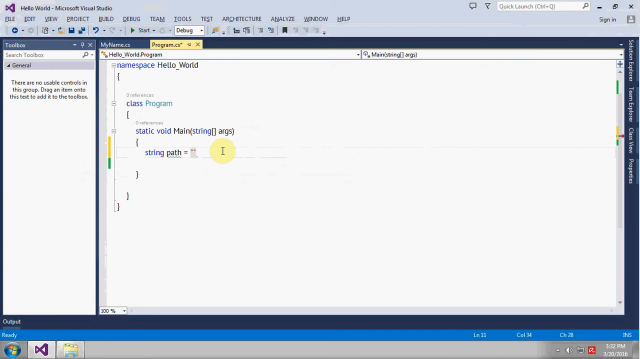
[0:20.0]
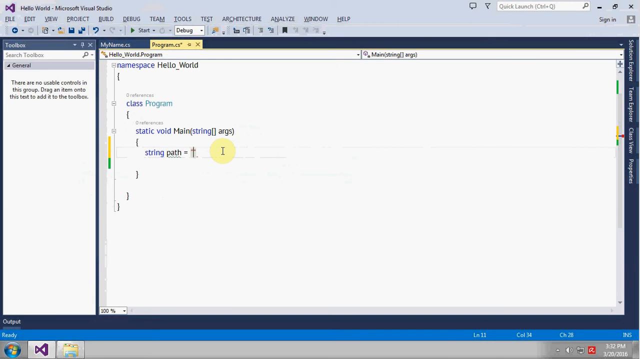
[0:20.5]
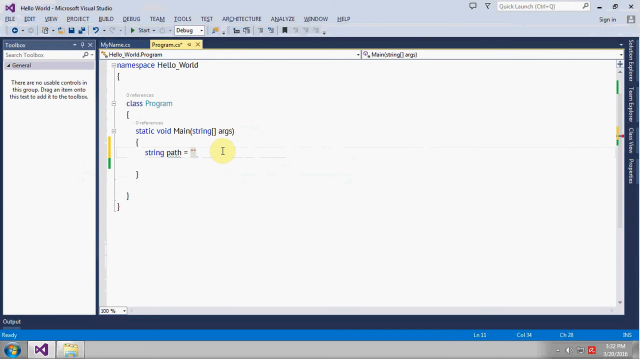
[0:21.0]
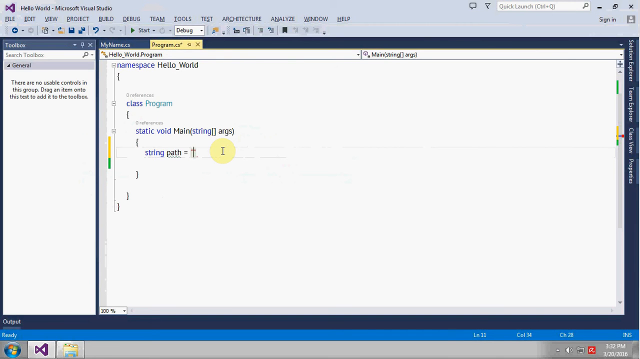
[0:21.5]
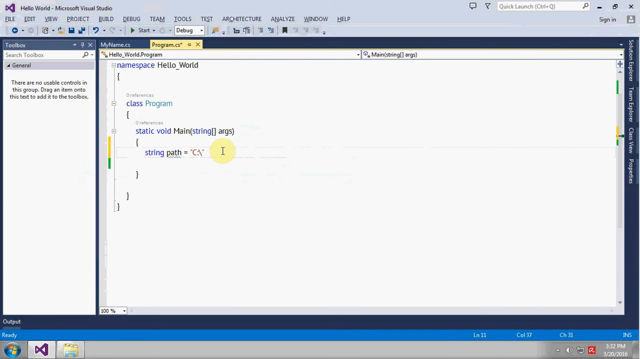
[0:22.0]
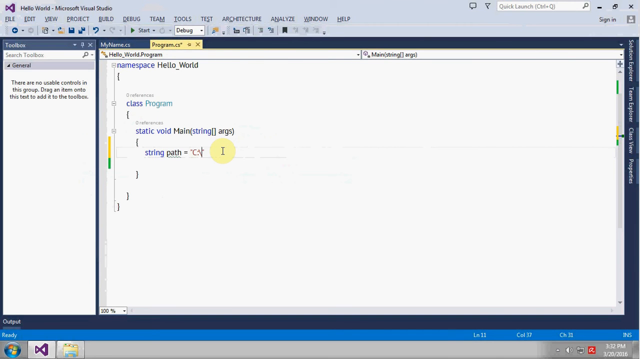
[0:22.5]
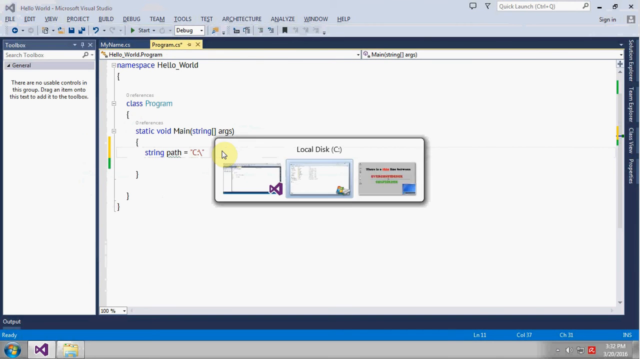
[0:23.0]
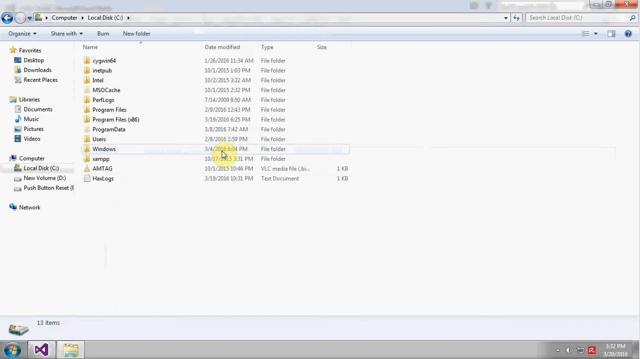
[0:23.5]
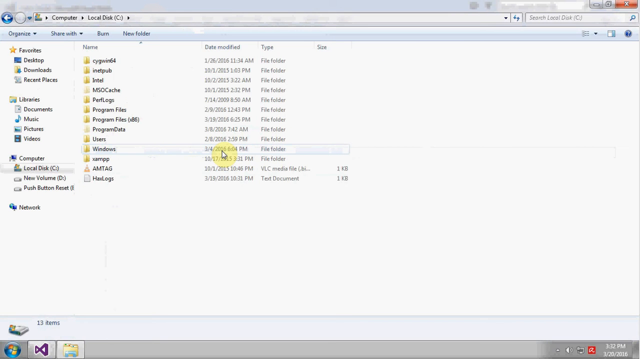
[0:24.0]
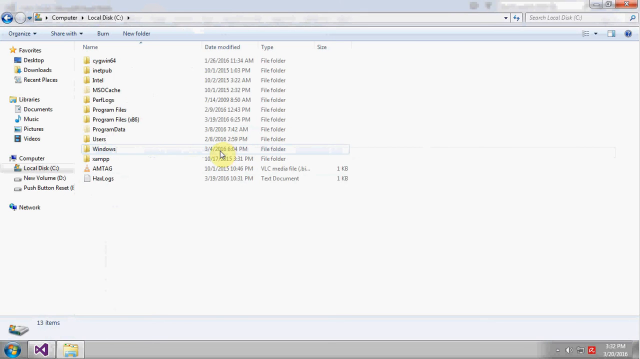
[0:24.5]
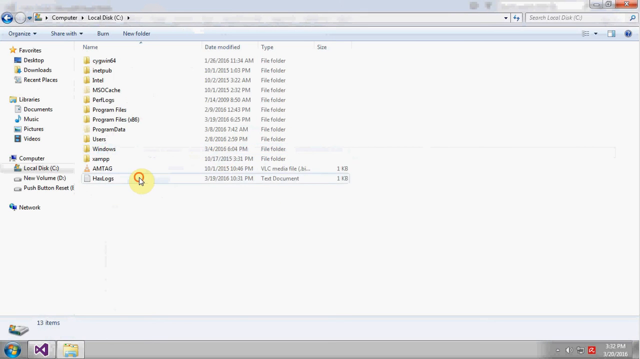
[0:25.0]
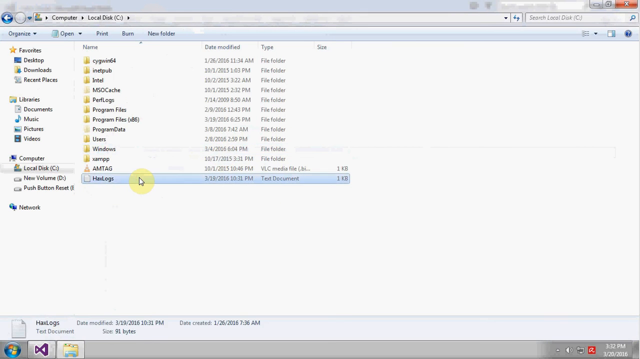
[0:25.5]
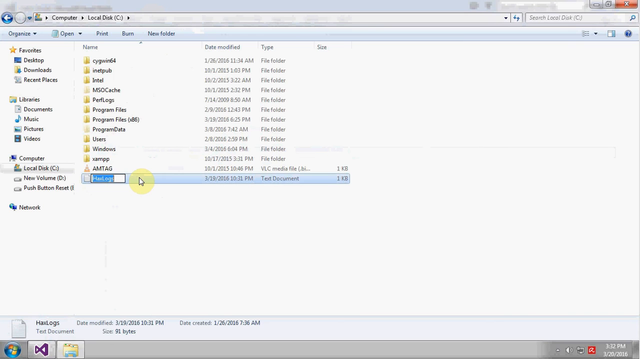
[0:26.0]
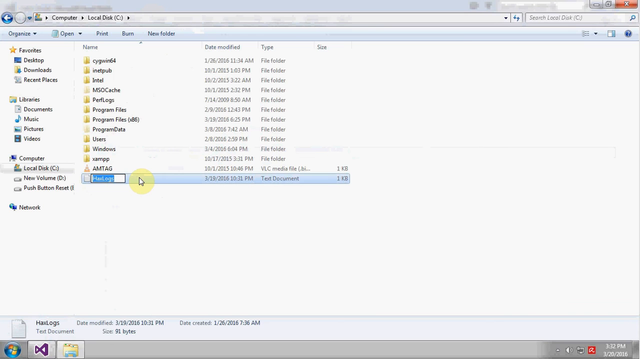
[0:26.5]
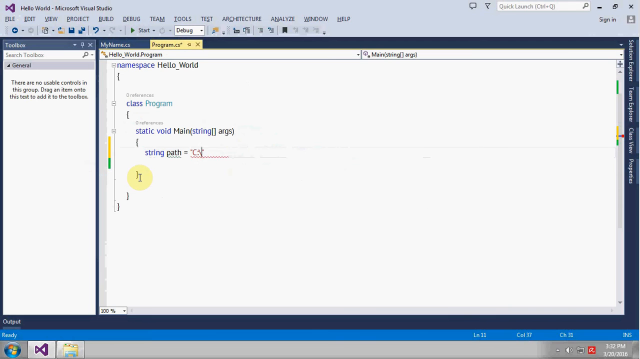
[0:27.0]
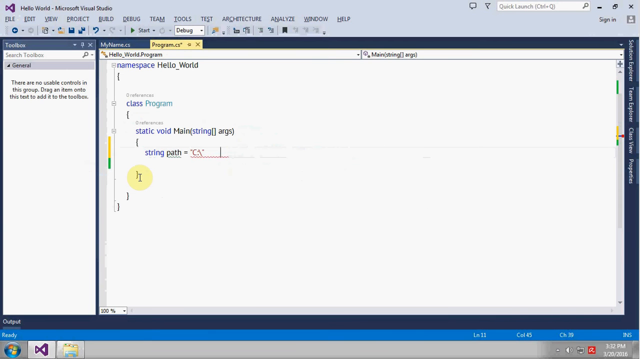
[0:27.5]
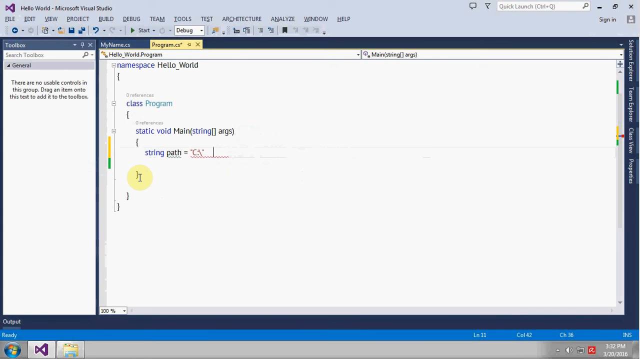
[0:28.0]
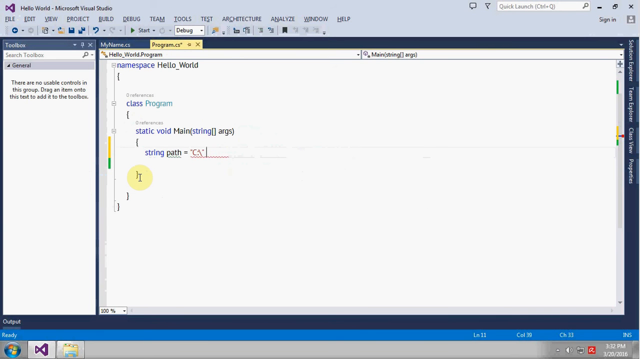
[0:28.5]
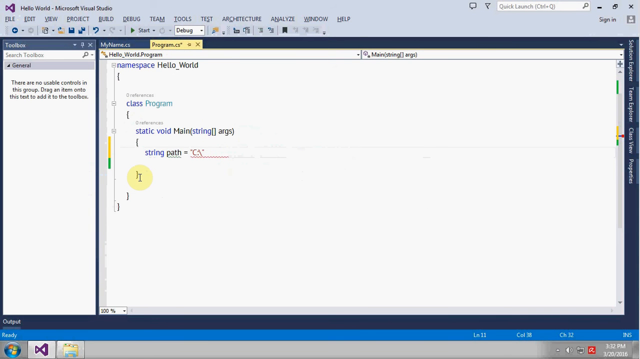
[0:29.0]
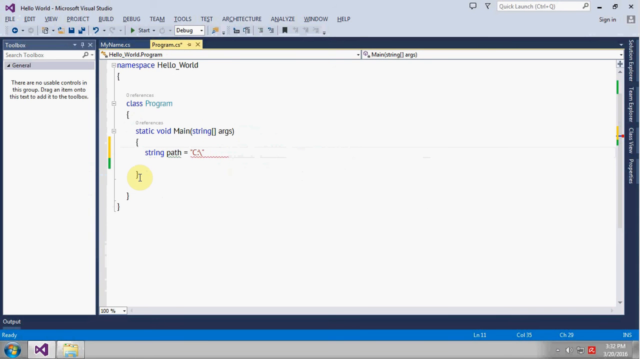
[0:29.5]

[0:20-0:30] Microsoft Visual Studio is open on Windows 7. In the hello world program, the code reads "string path =" followed by a pair of inverted commas. Typing begins with "c-\". The view then goes back to File Explorer for the file name, has logs. The cursor then moves as if about to type has logs into the script.